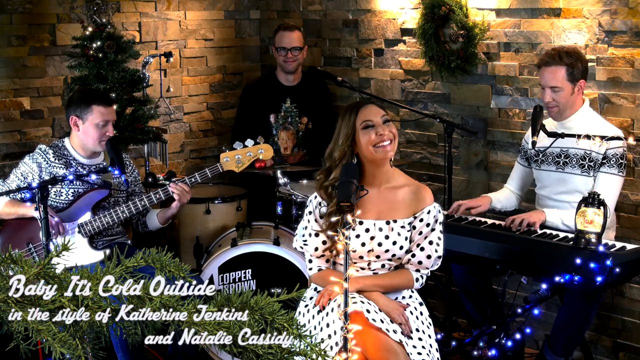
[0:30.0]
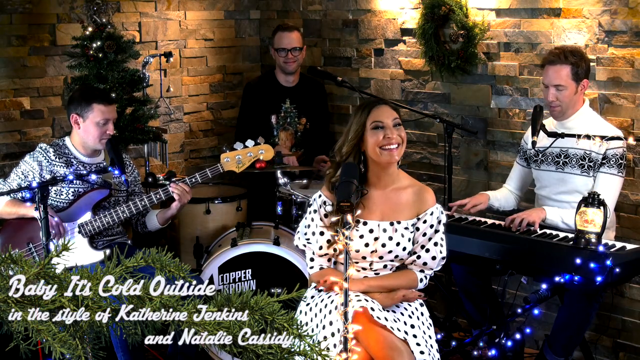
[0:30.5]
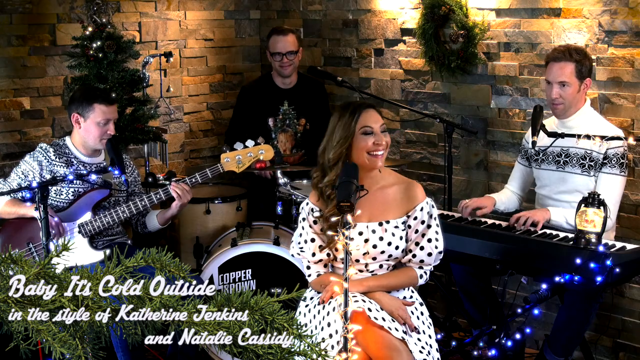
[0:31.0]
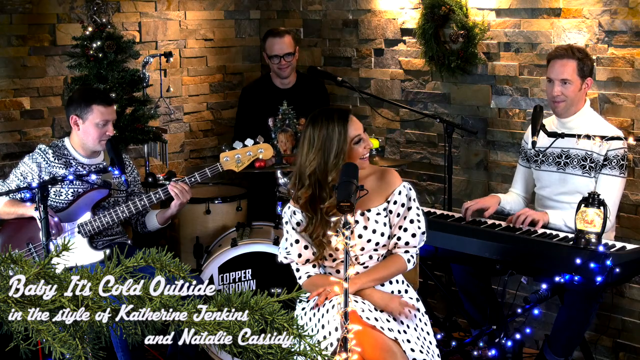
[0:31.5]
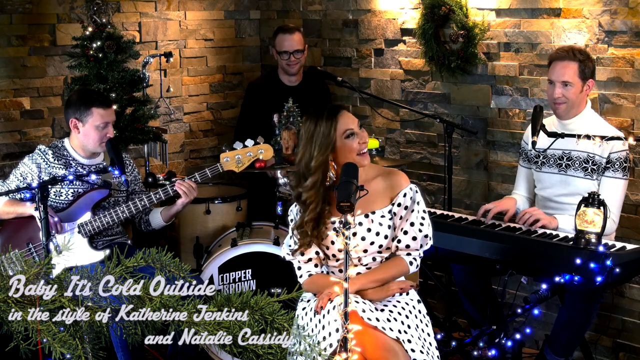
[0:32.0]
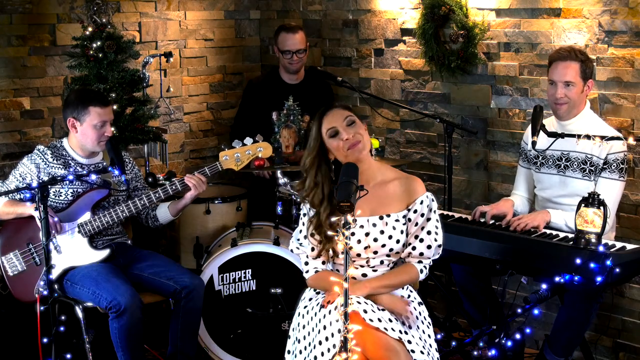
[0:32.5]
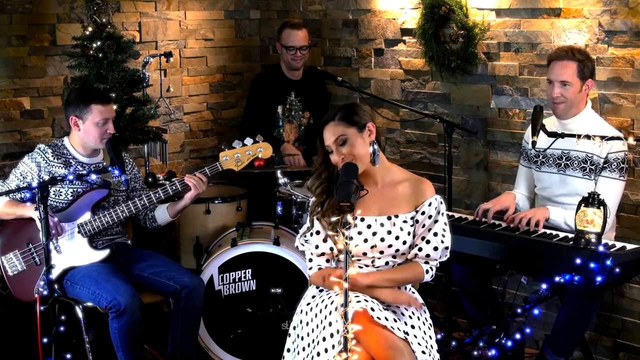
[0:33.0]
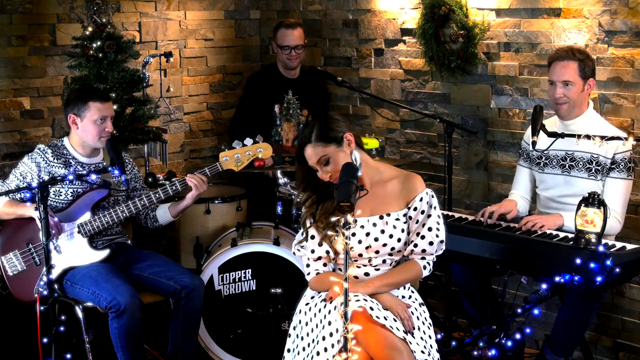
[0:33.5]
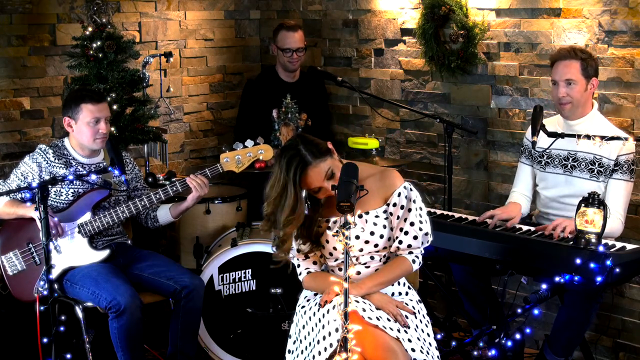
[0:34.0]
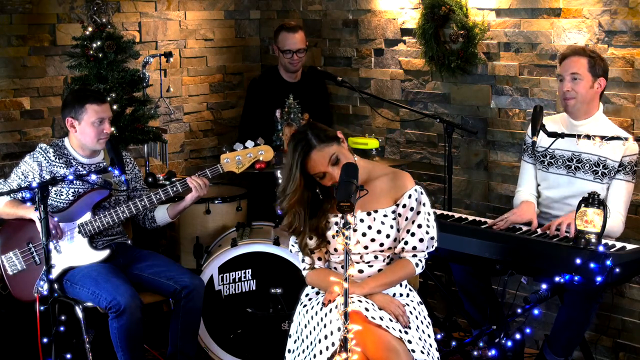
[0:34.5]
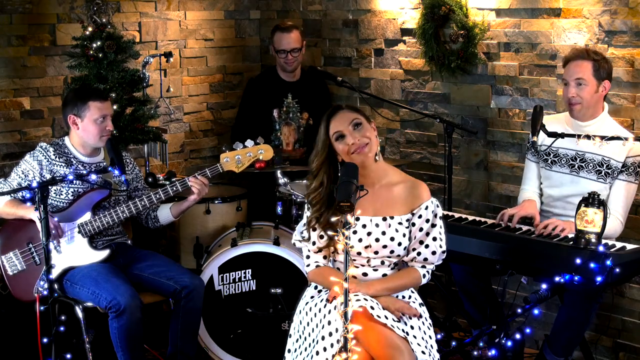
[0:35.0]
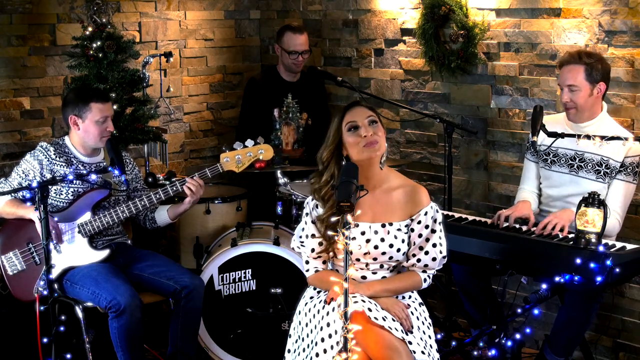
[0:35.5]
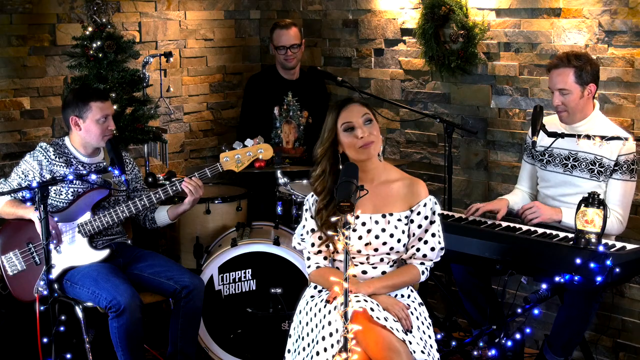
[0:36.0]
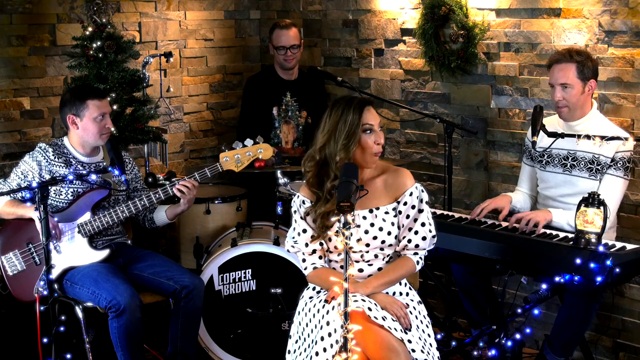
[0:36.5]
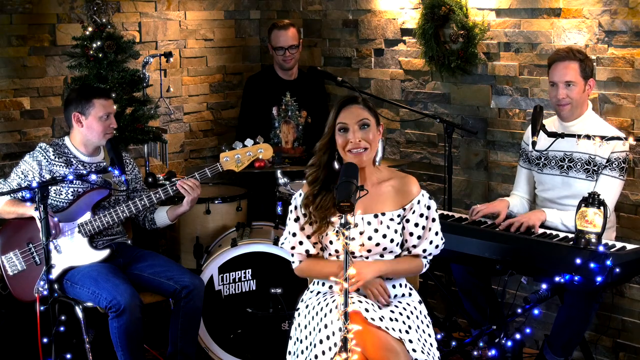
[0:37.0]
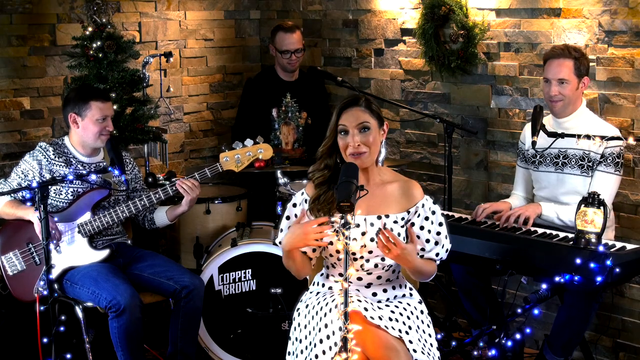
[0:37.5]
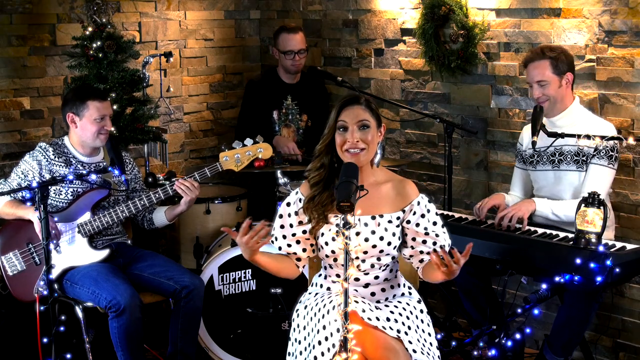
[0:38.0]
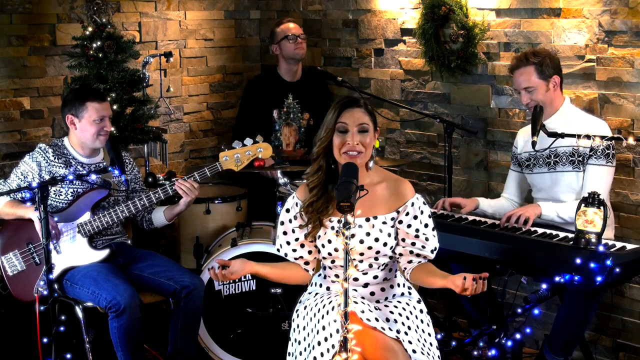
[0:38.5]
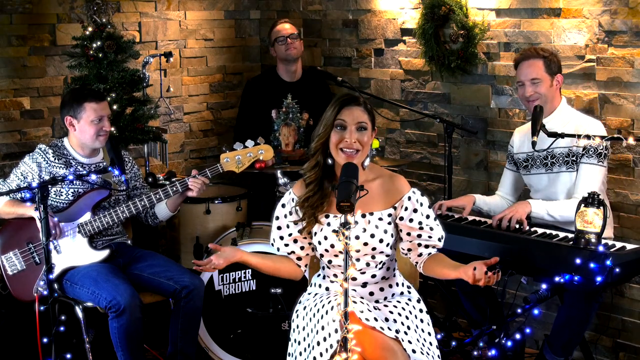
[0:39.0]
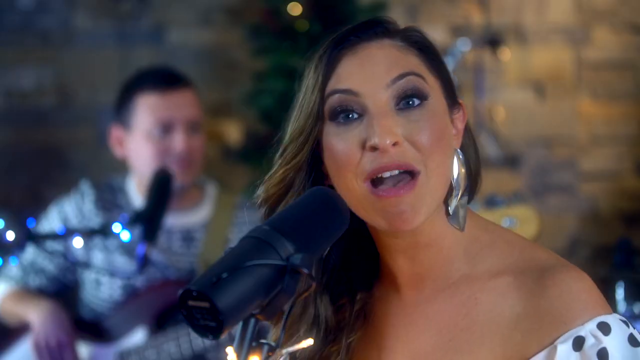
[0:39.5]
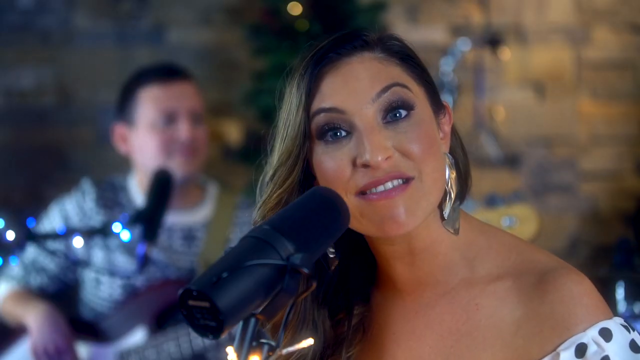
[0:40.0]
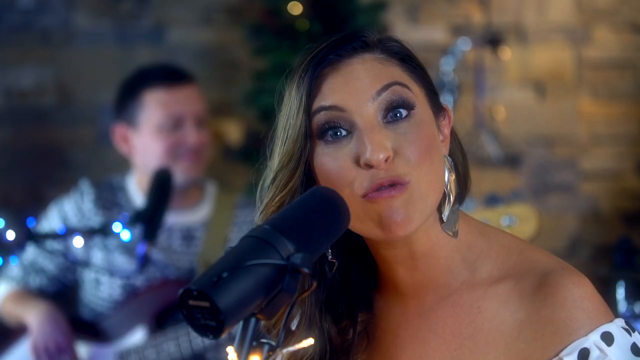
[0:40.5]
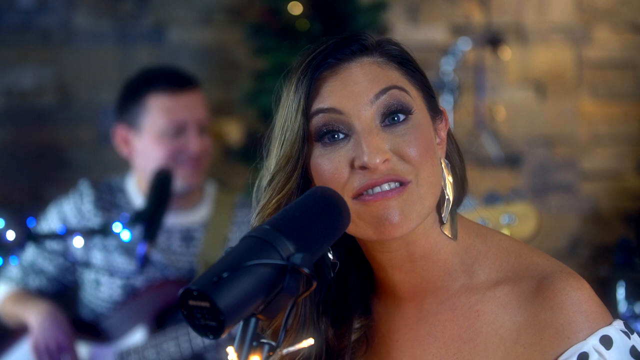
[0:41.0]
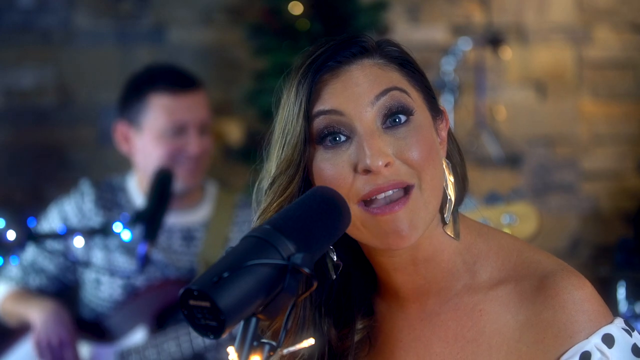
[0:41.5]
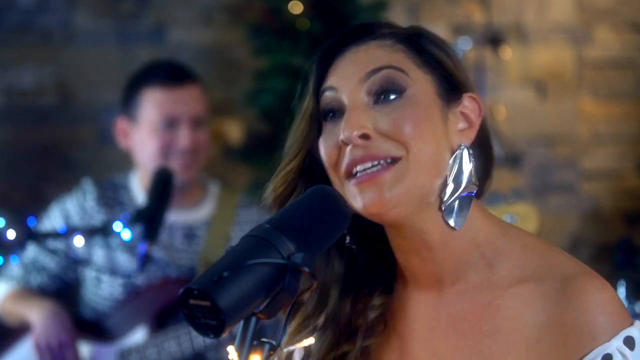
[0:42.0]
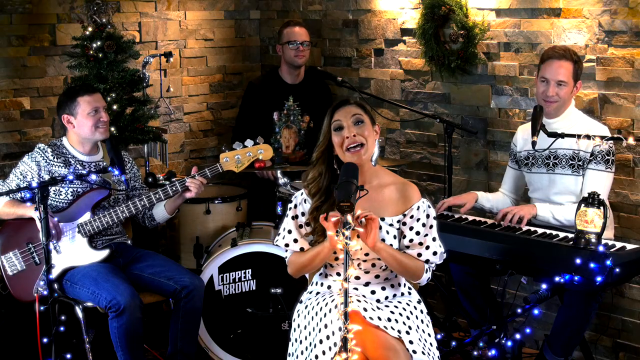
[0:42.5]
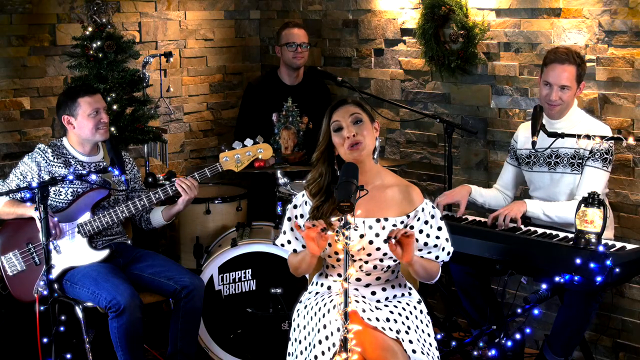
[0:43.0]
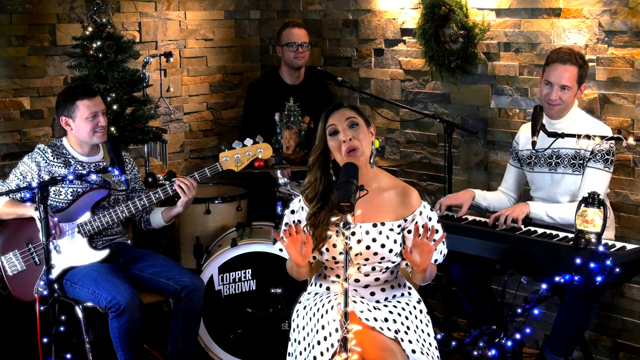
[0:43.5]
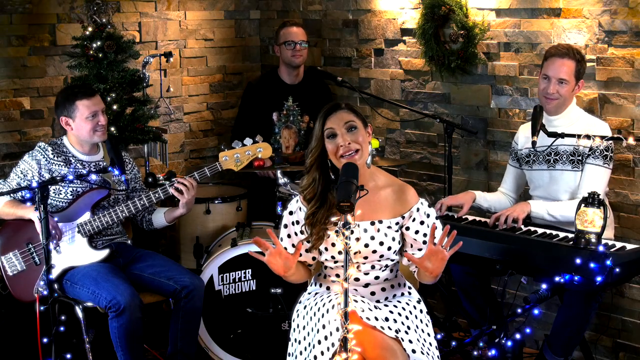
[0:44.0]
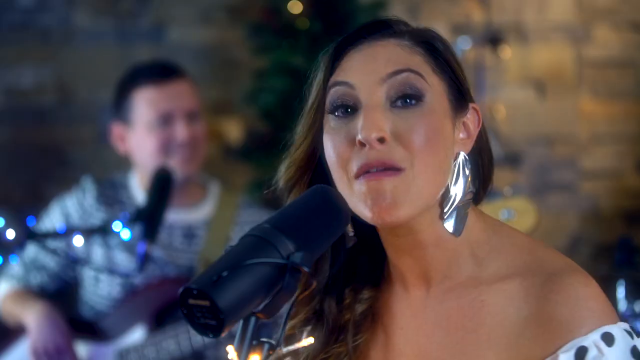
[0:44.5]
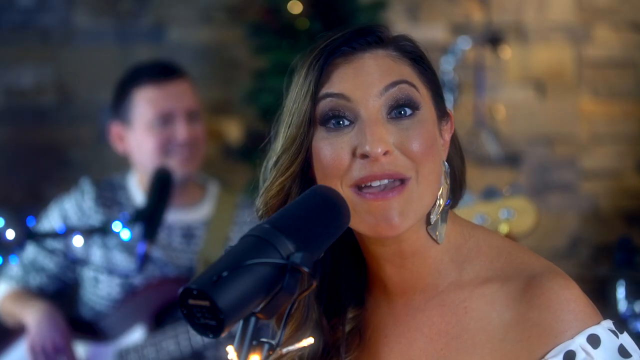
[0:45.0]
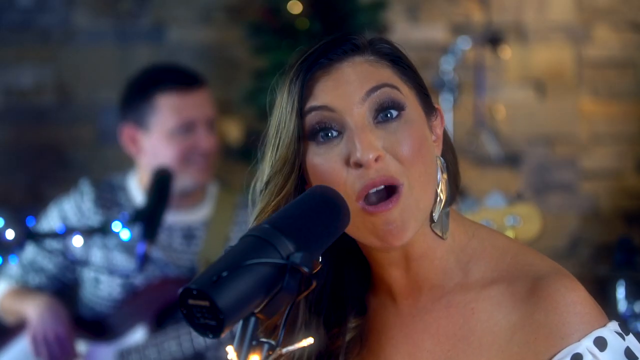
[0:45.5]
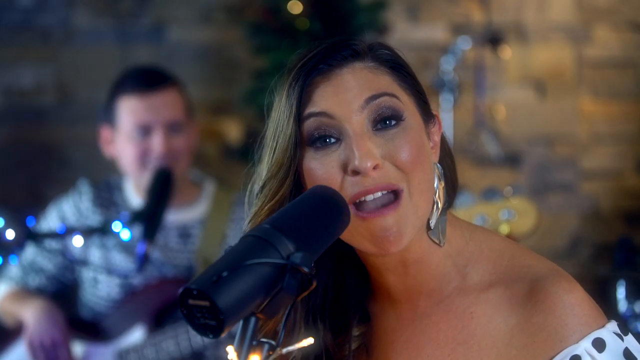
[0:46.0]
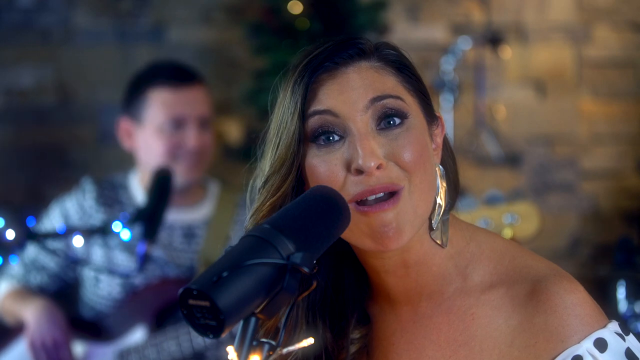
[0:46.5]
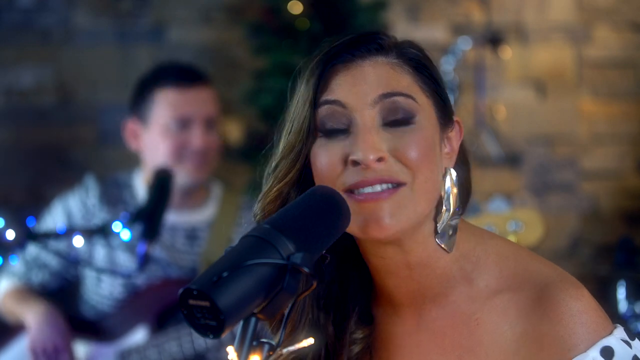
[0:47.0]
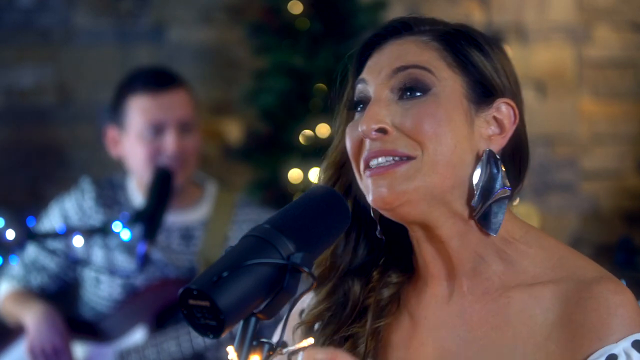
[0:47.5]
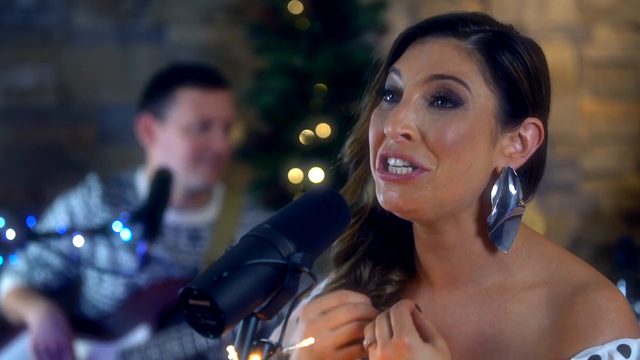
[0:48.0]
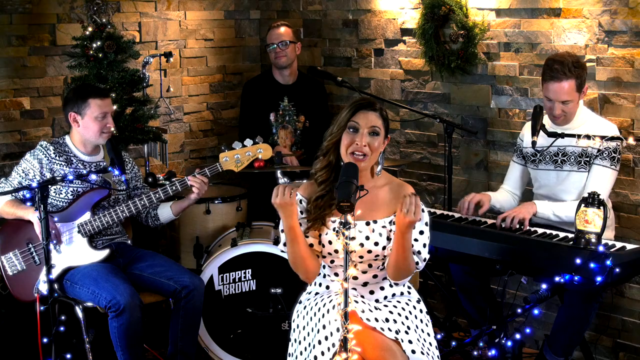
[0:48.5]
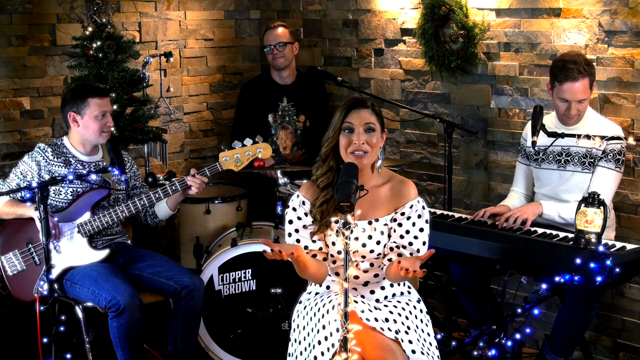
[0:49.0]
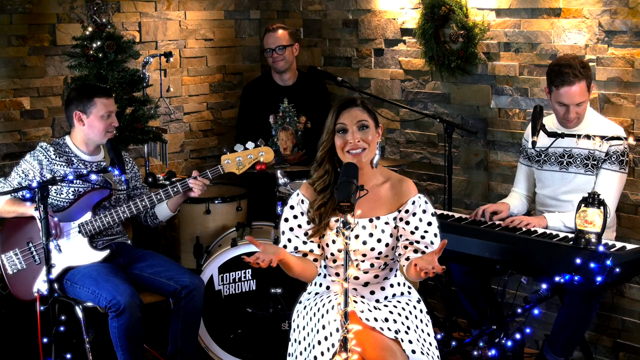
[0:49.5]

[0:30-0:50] Four musicians are on a stage, and text in the lower left reads "Baby it's cold outside". The woman is seated with a microphone on a stand in front of her. Of the three men, one has a guitar, one is at a drum kit and the other is at a keyboard. She sways back and forth, tapping her hands in her lap and smiling, while the musicians all play their instruments. She begins to sing, moving her hands in a kind of outward flow. She turns her head and looks like she is speaking a little into the microphone, and the camera cuts to a close-up of her face doing this. The shot returns to the overview of the group, then cuts to another shot of her singing or speaking into the microphone. She is very expressive and smiley, and she wears big dangly earrings.